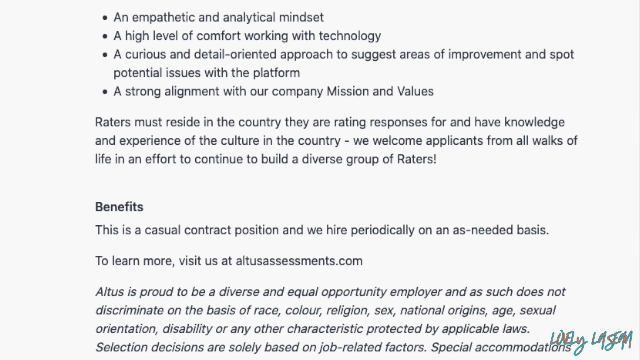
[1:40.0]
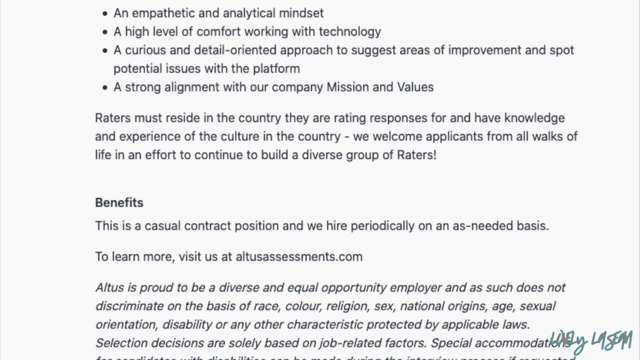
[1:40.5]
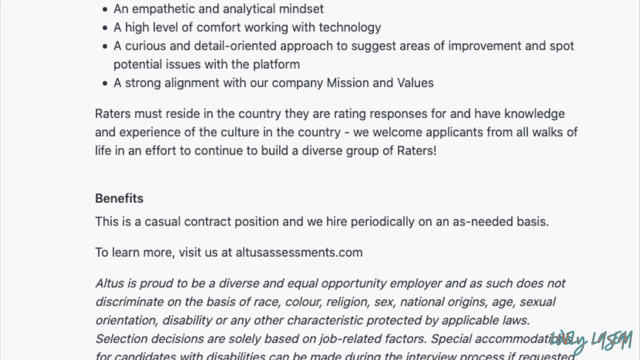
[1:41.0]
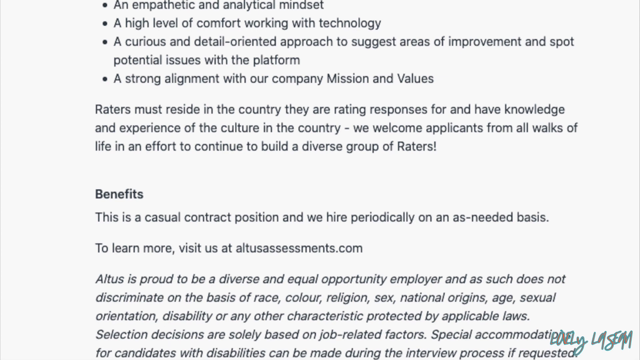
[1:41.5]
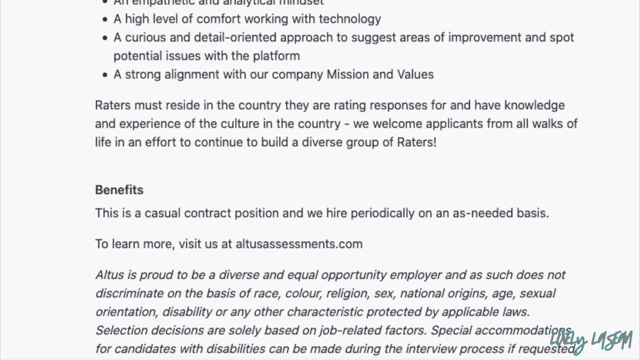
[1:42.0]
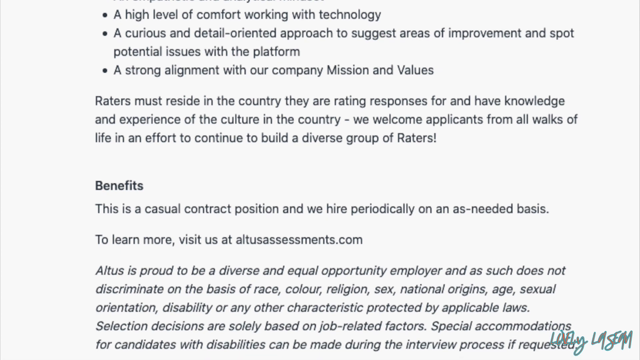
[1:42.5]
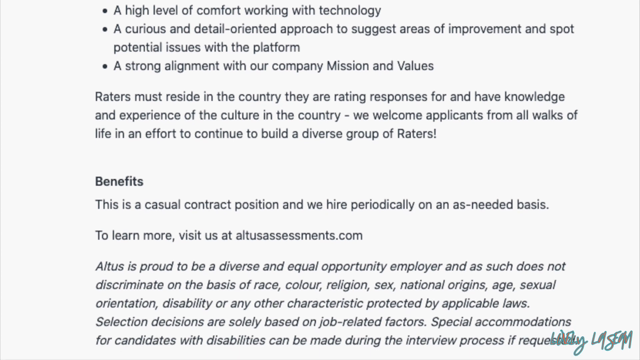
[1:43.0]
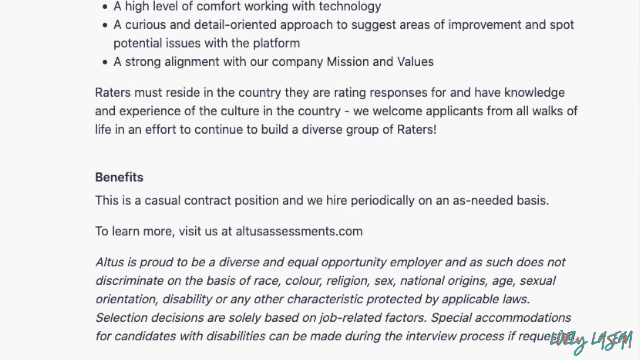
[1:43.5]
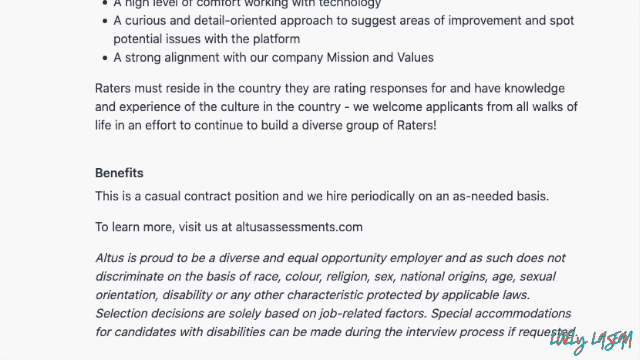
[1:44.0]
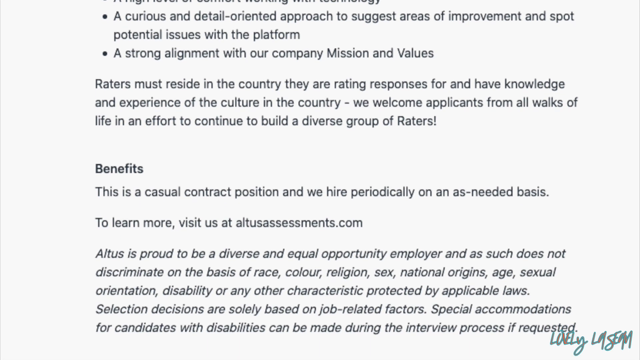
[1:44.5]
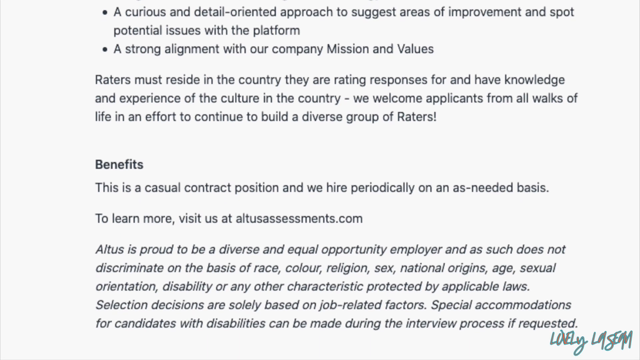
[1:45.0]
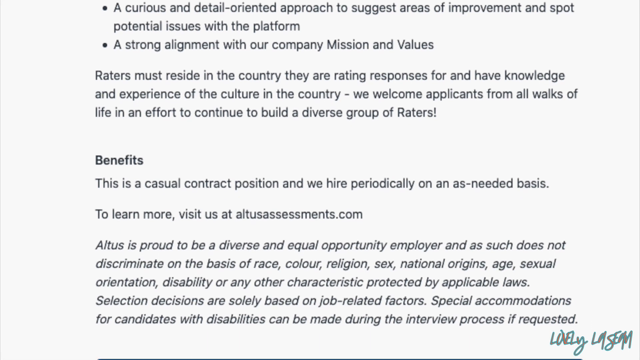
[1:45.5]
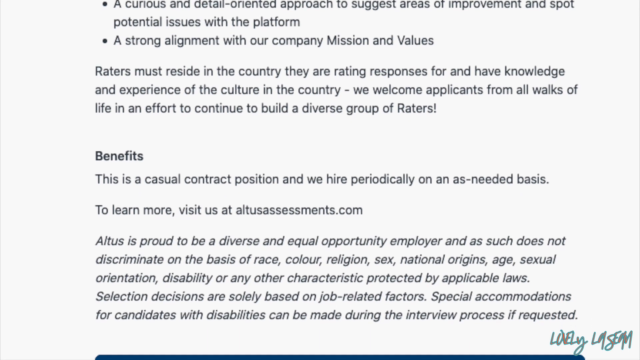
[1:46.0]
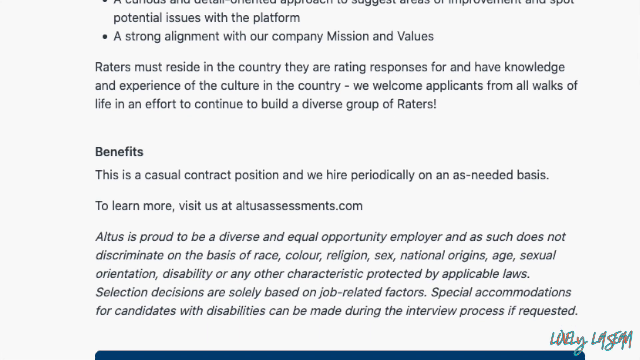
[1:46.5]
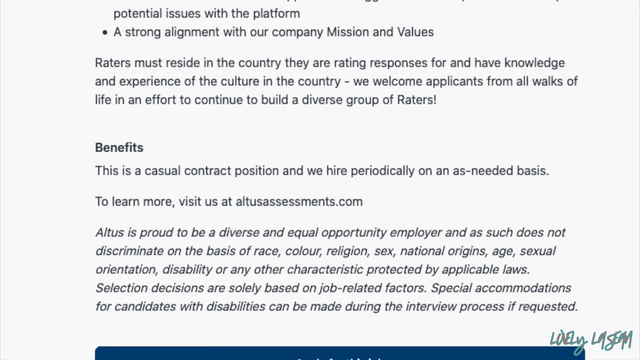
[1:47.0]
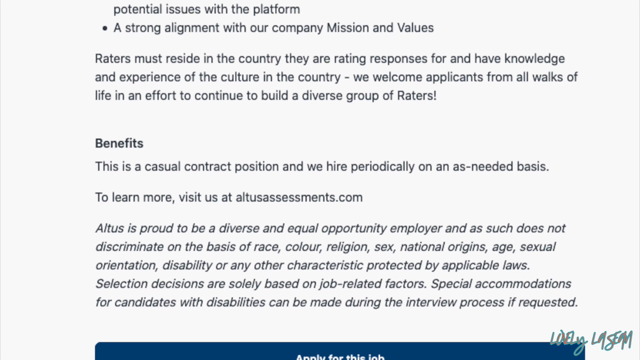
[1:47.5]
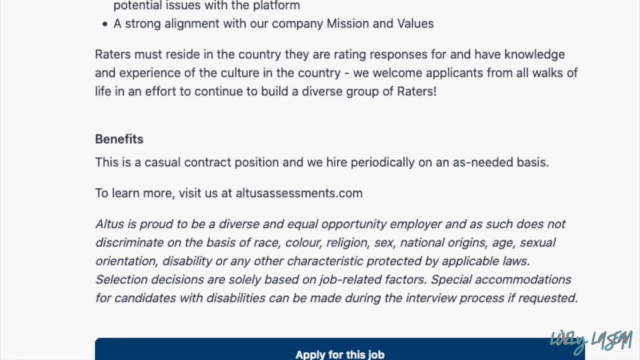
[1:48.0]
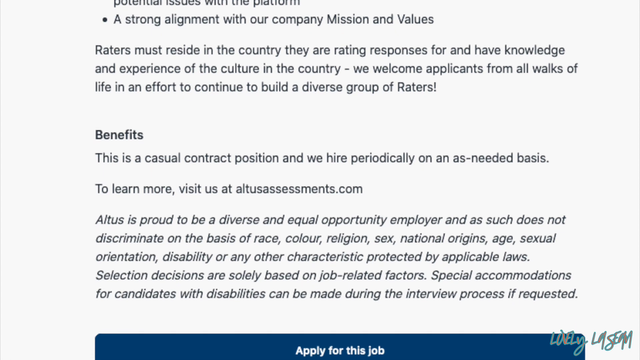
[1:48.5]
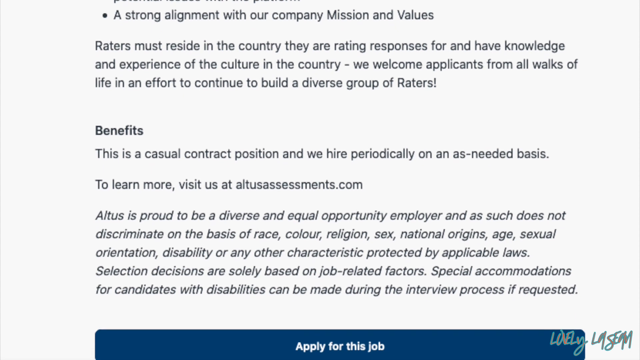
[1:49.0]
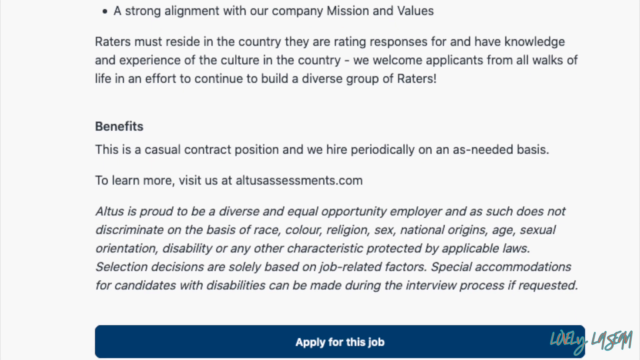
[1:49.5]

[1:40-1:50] The requirements list reads "an empathetic and analytical mindset, a high level of comfort working with technology, a curious and detail-oriented approach to suggest areas of improvement and support potential issues with the platform, a strong alignment with our company, mission and values," along with residing in the country they are rating responses for and having knowledge and experience of that country's culture. The text continues "We welcome applicants from all walks of life," and under benefits says "This is a casual contract positions and we hire periodically on an as-needed basis."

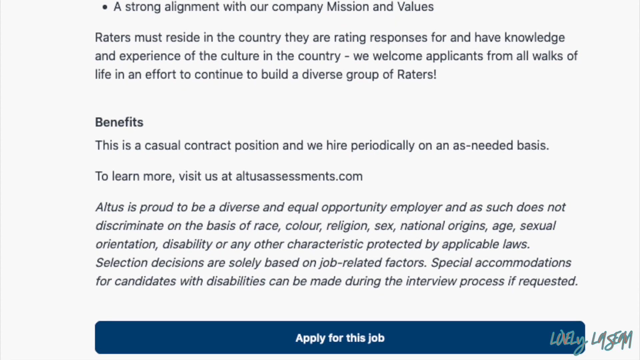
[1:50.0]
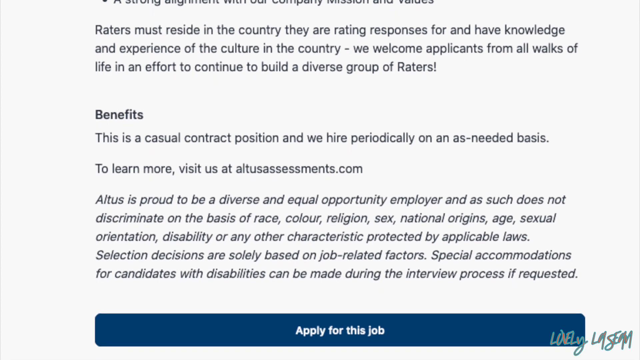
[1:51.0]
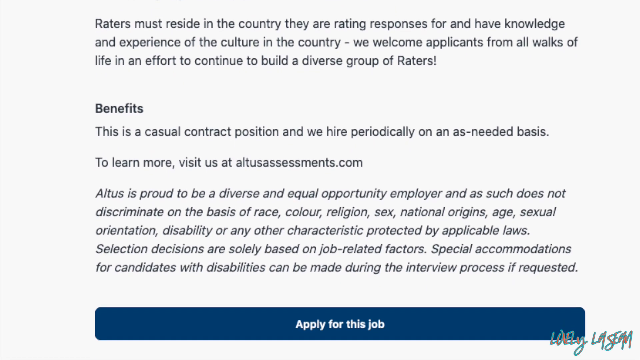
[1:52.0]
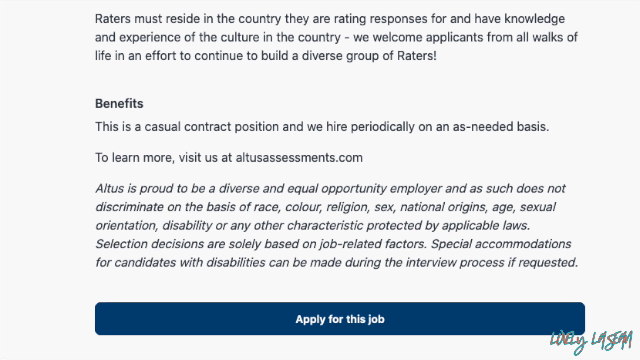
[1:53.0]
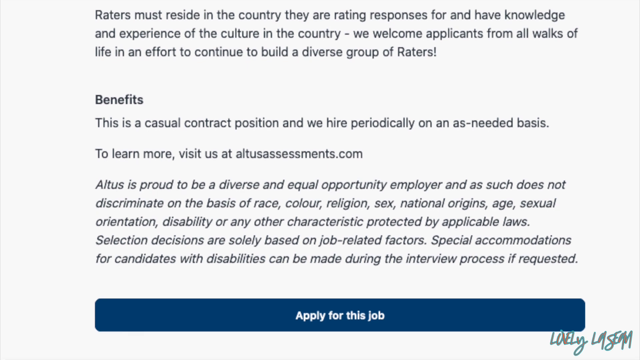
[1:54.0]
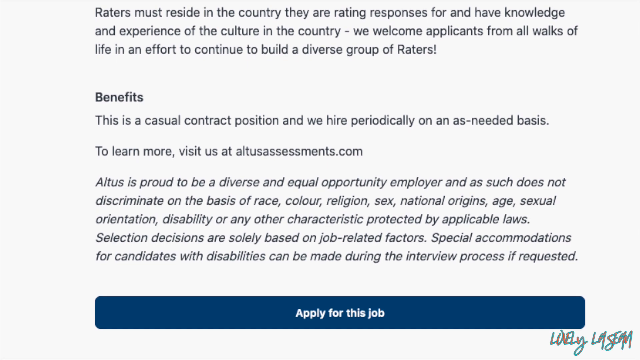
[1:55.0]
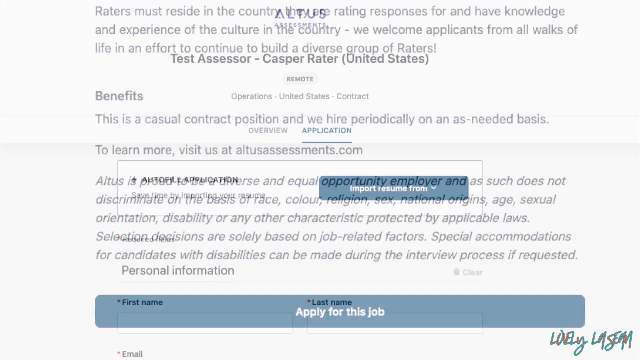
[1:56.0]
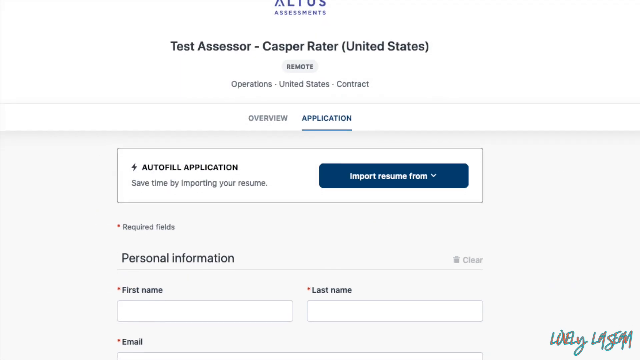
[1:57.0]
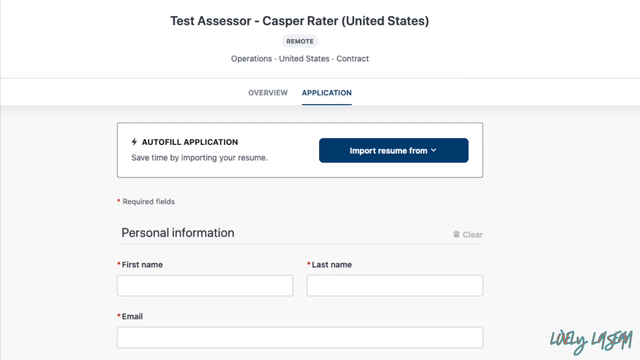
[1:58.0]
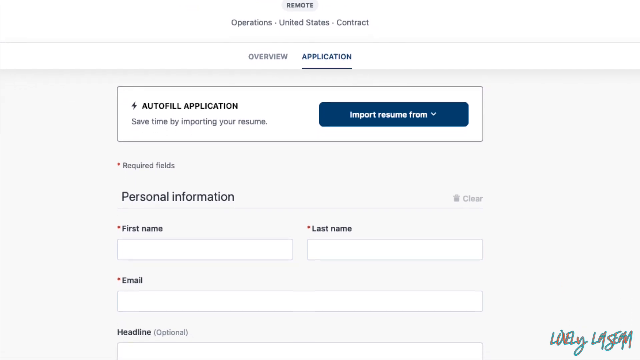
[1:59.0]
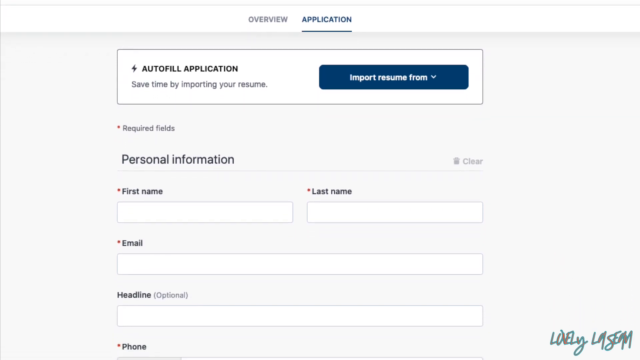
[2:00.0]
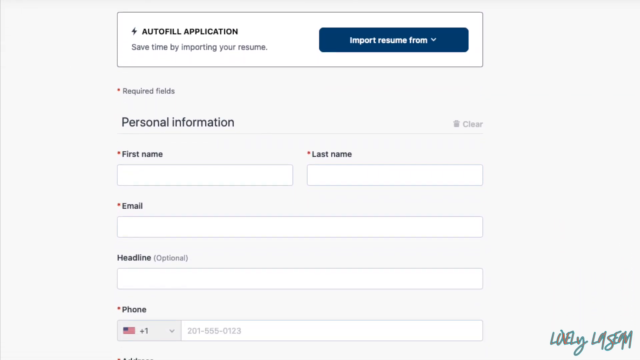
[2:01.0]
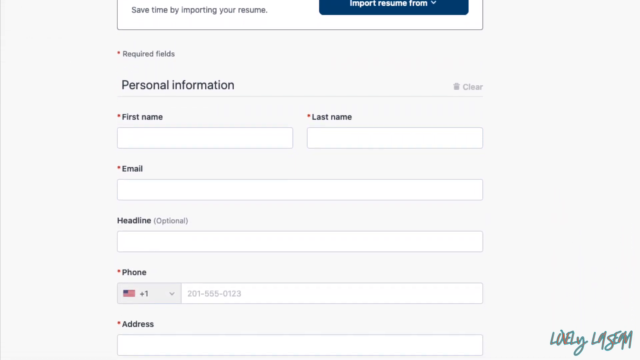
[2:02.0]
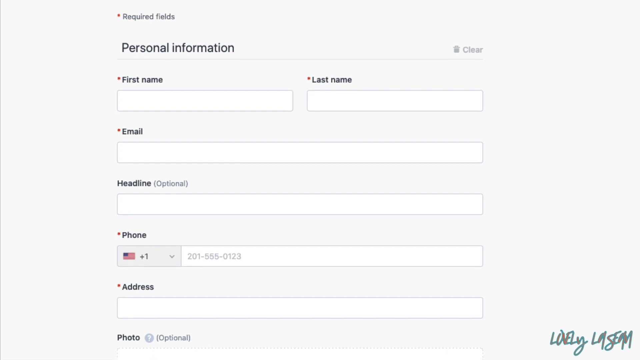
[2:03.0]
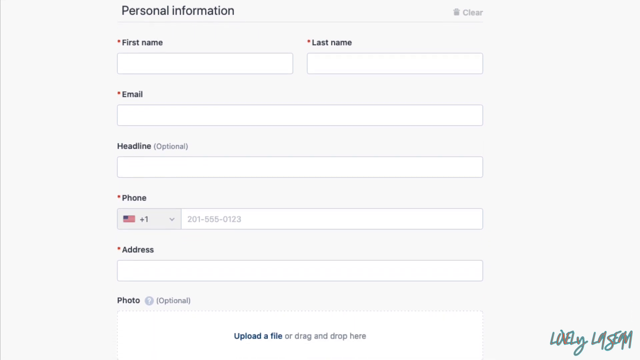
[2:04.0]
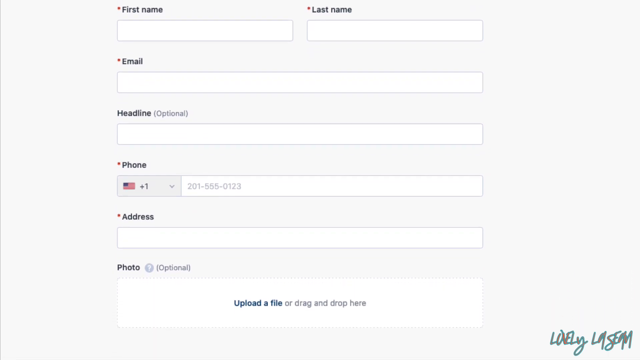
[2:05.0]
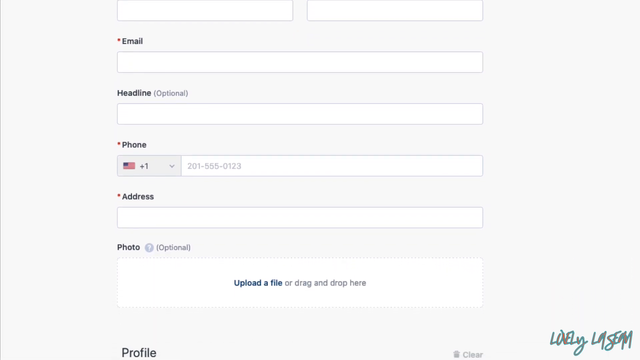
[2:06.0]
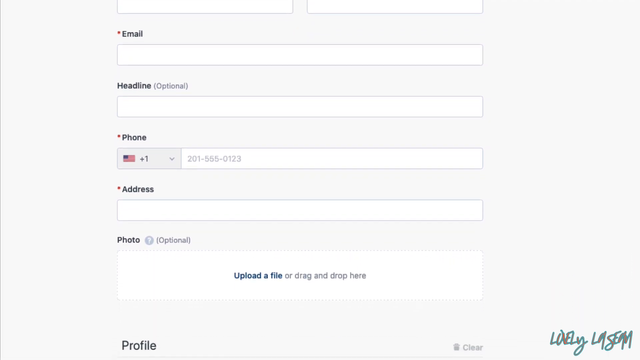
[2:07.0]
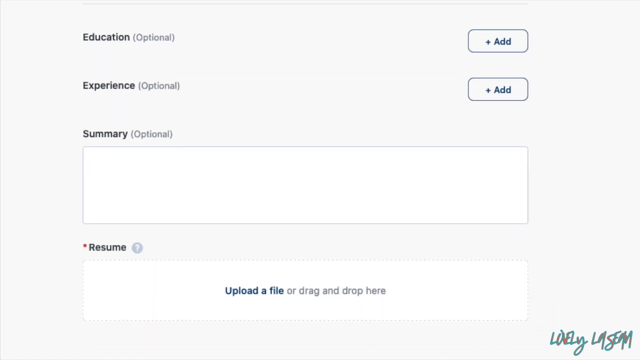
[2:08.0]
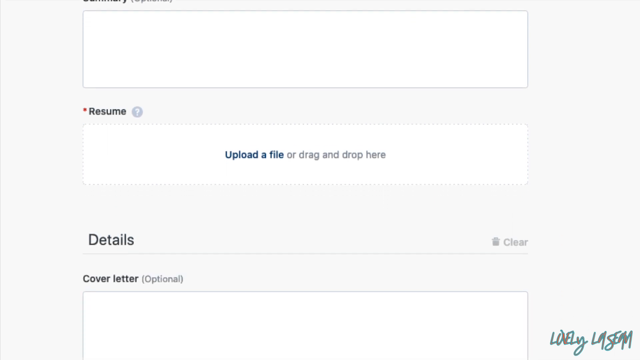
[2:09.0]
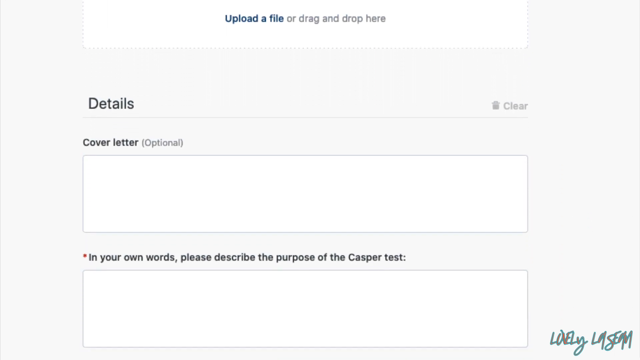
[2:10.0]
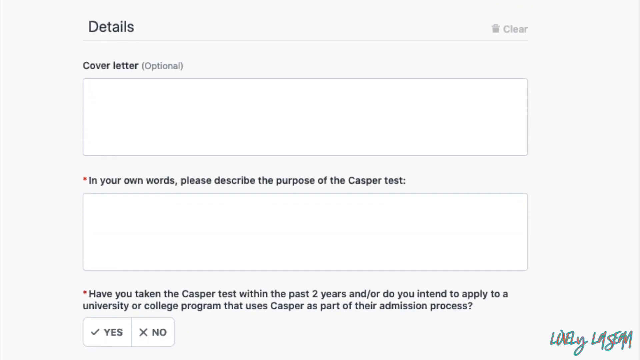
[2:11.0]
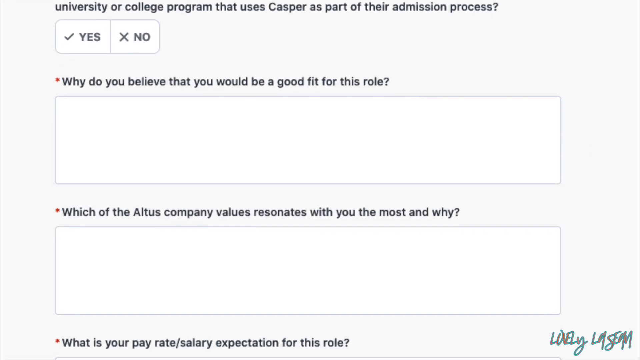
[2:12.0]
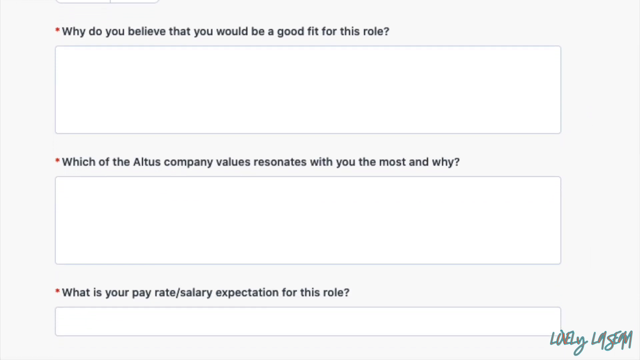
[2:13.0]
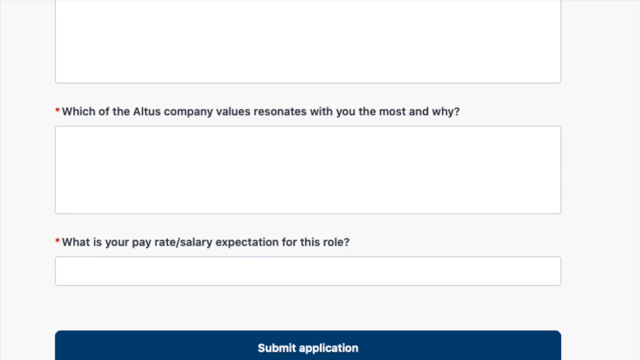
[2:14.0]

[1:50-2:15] The benefits text reads "This is a casual contract position and we hire periodically on an as needed basis," followed by "To learn more, visit us at" a website address. An equal opportunity statement says the company "is proud to be a diverse and equal opportunity employer" and "does not discriminate on the basis of race, color," gender, sex, age, sexual orientation, disability "or any other characteristics protected by applicable laws." It adds "Selection decisions are solely based on job related factors" and that "Special accommodations for candidates with disabilities can be made during the interview process."